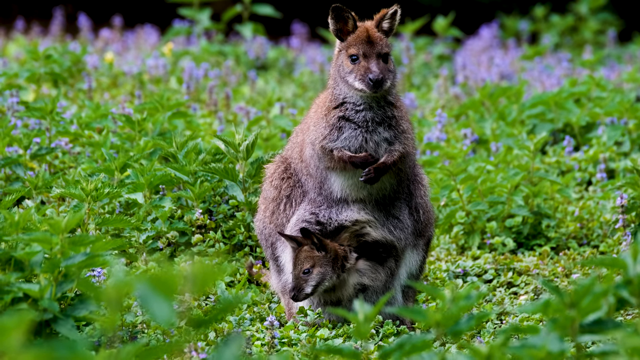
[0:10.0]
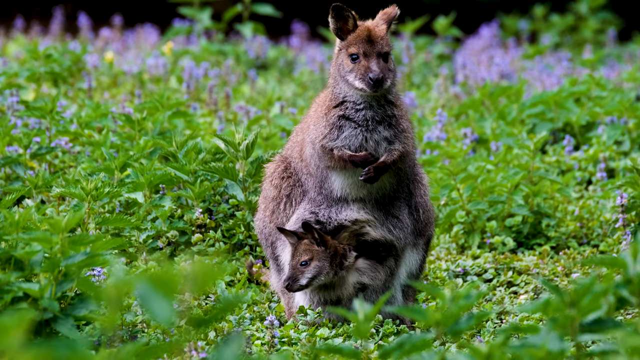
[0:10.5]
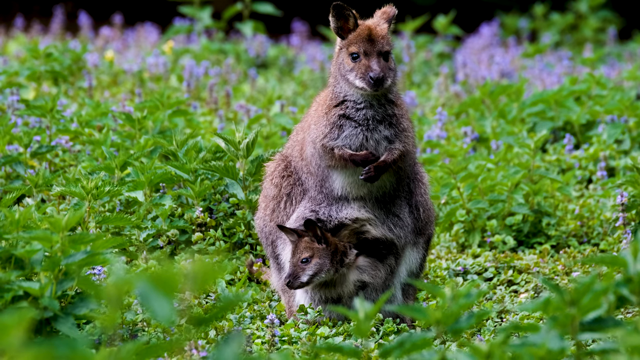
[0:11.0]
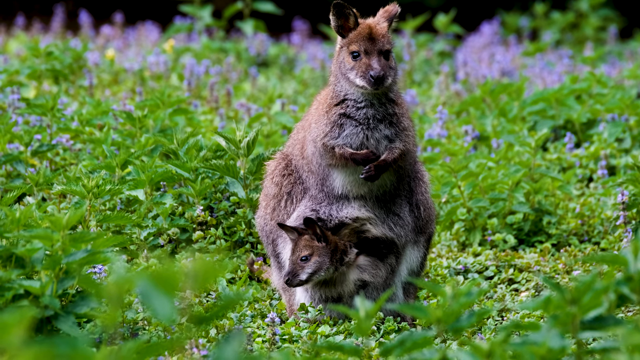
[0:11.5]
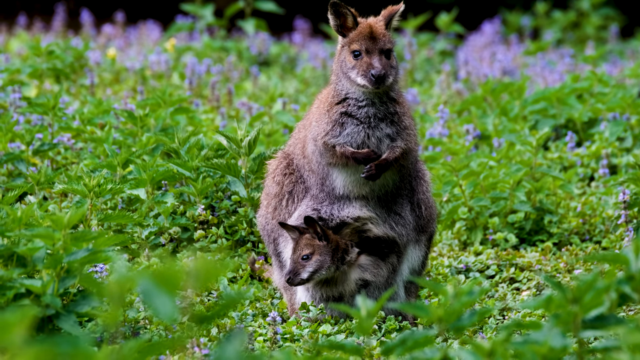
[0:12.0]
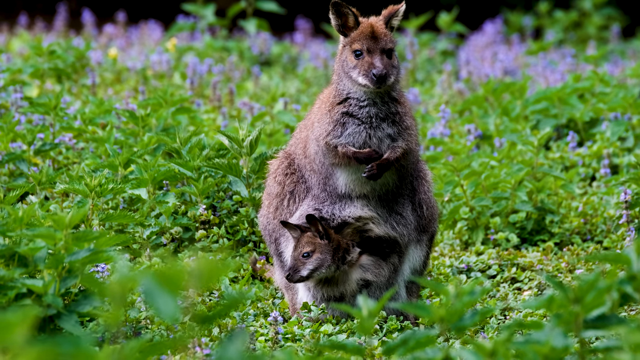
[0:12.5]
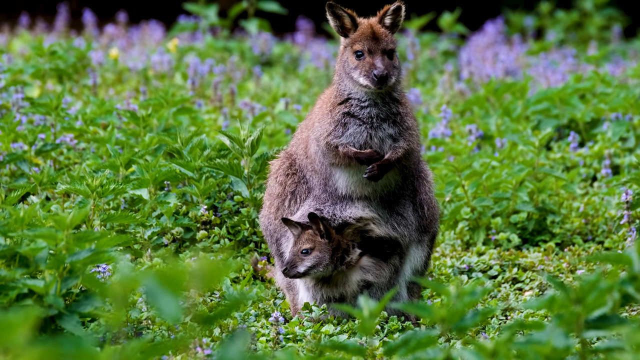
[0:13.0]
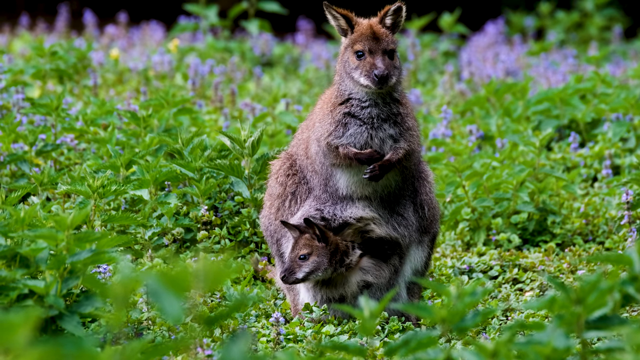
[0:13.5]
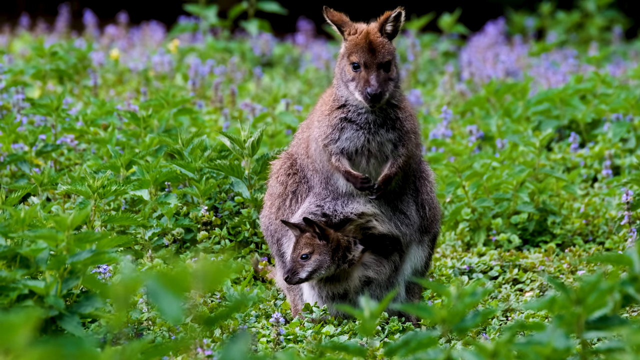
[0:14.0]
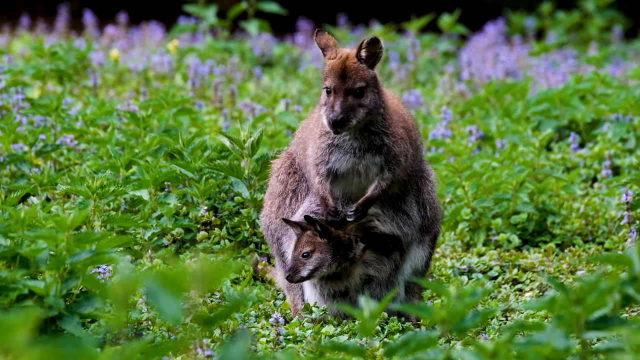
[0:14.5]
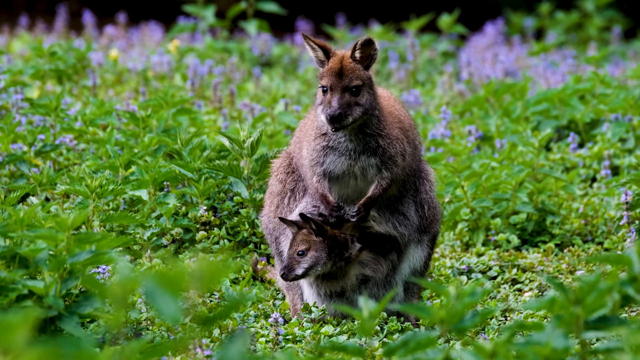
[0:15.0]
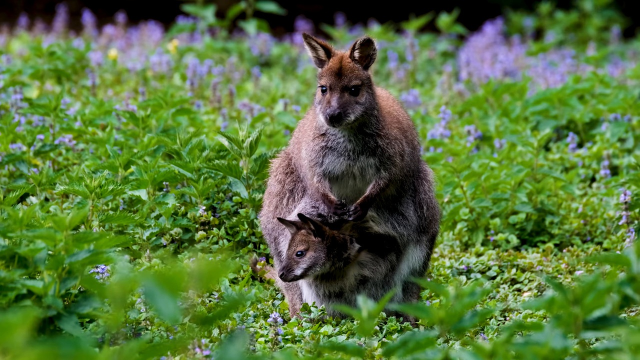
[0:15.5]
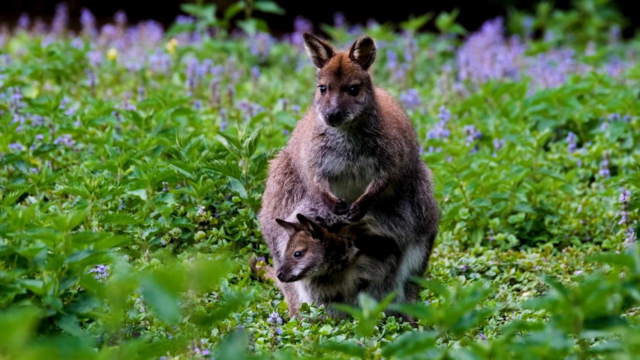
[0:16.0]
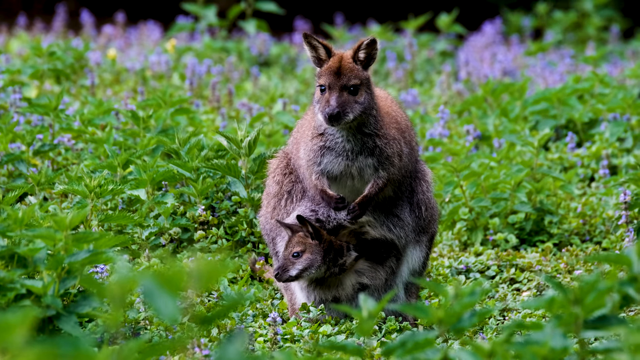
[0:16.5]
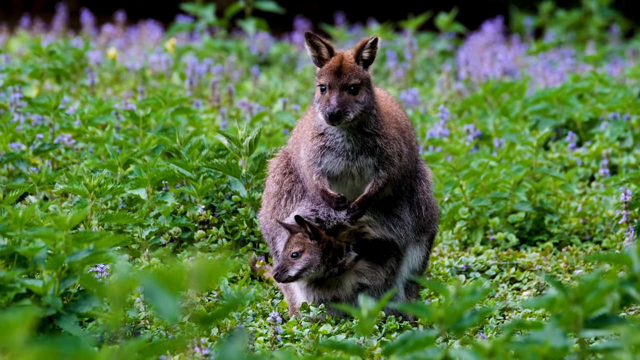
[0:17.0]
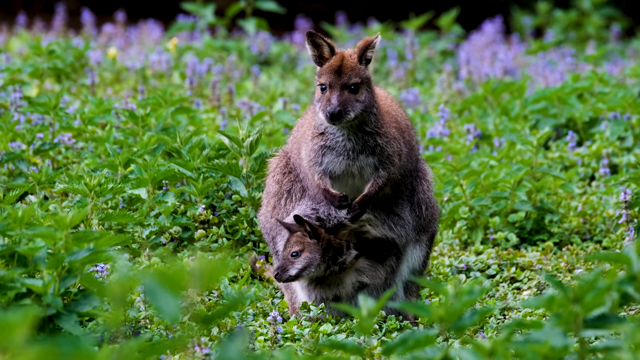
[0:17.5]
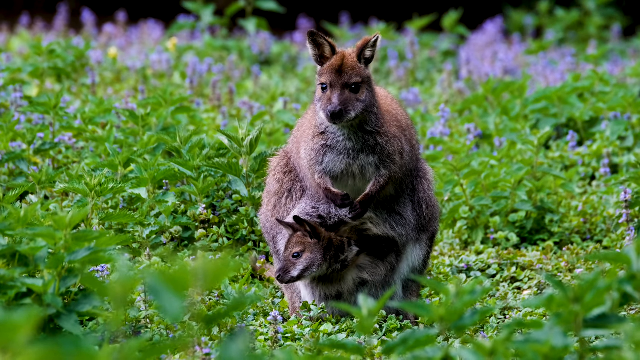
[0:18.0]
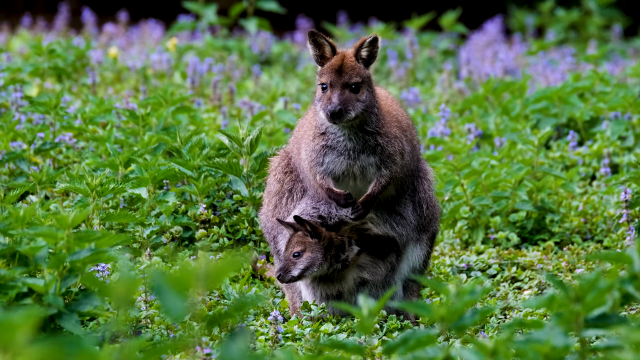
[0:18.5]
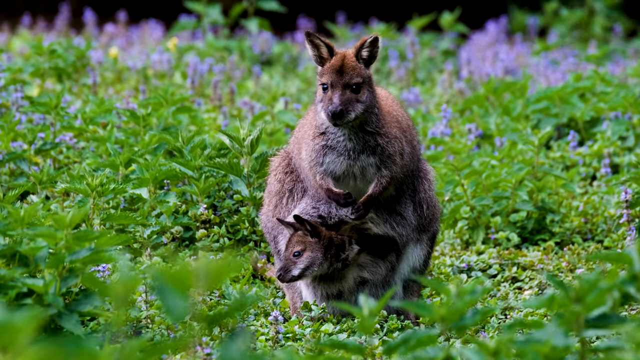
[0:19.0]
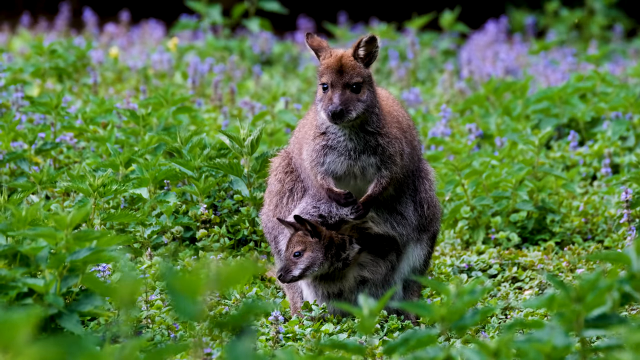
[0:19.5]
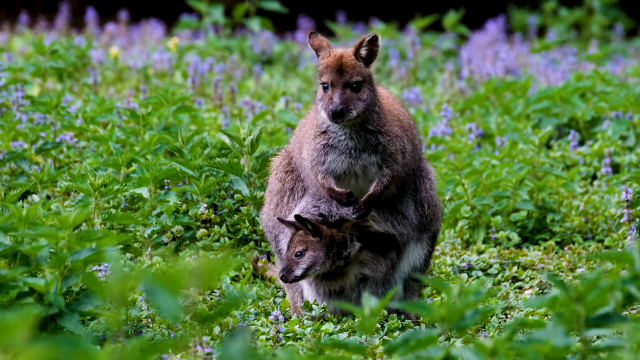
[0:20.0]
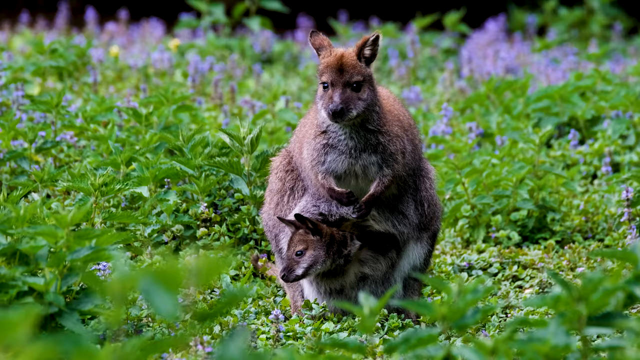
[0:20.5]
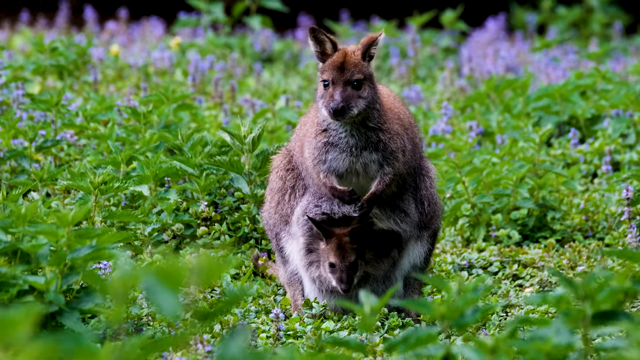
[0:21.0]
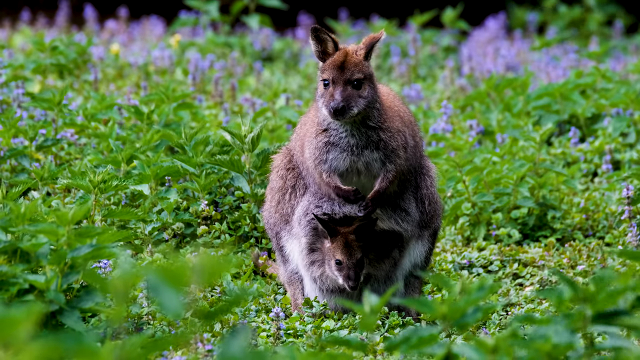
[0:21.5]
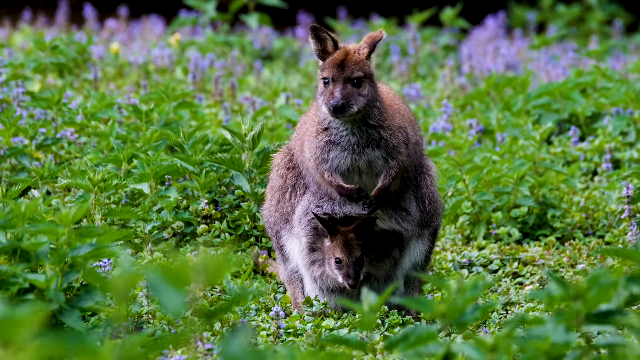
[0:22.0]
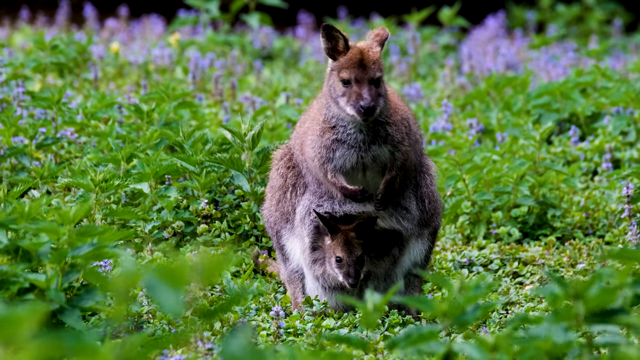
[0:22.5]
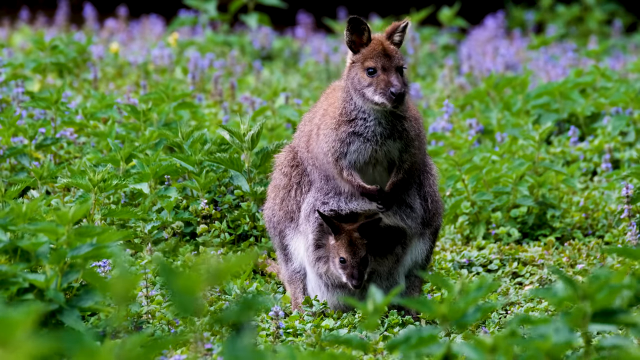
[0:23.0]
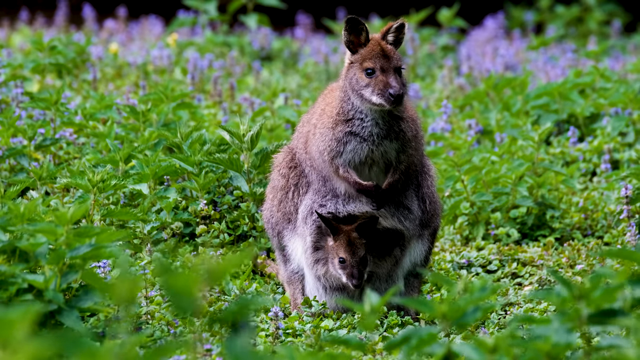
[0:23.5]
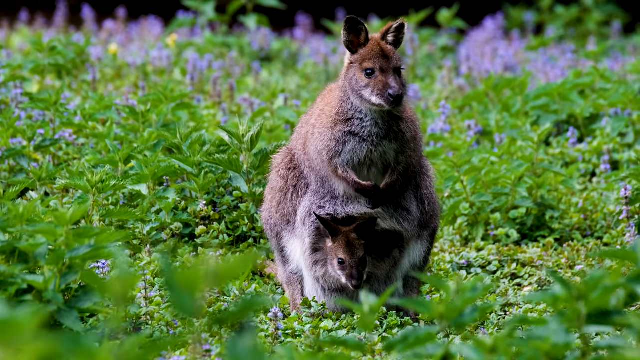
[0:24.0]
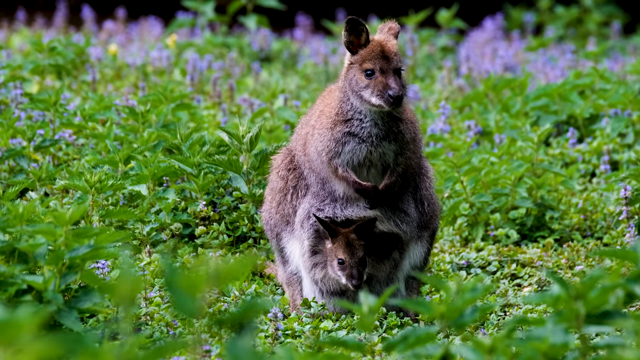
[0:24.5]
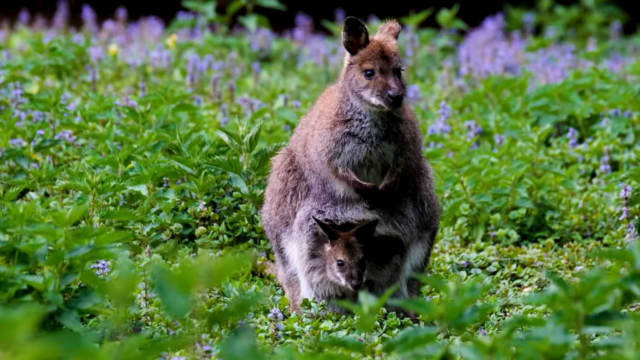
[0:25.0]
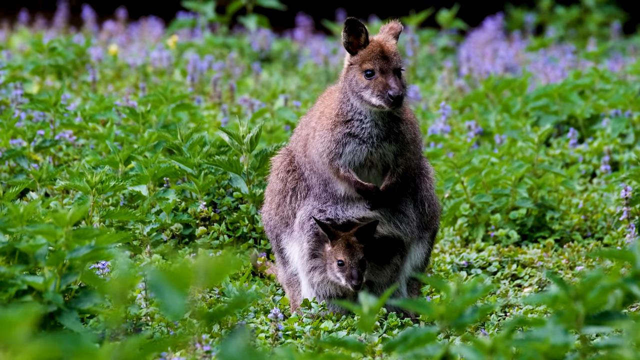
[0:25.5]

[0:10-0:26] In the meadow with purple flowers, the same brown furry animal has its baby in a pouch. At the beginning, the mother almost seems to hear something as her ears twist at 180-degree angles, and then she kind of leans down as if looking towards something in a slightly protective manner. Her eyes look focused on something off camera, while the baby remains in her pouch. Towards the end, the mother looks as if she begins to relax and eases back into her original stance. The animal has a stance and face similar to a kangaroo's but is fluffier and smaller. The baby remains in the pouch the entire time. As the video goes on, the wind seems to pick up, swaying some of the leaves and flowers around them.